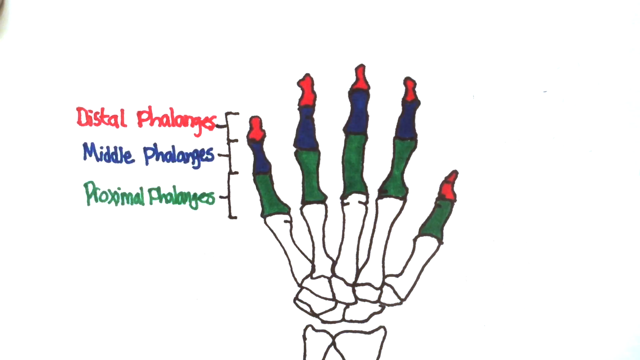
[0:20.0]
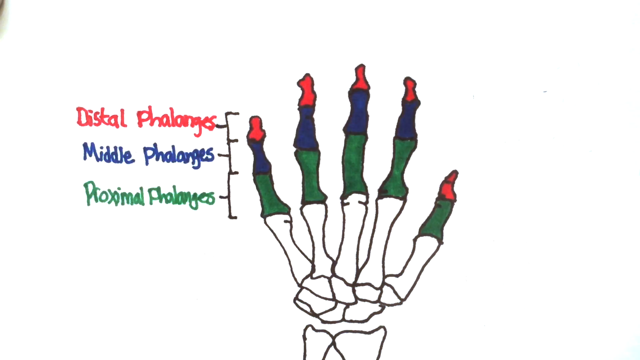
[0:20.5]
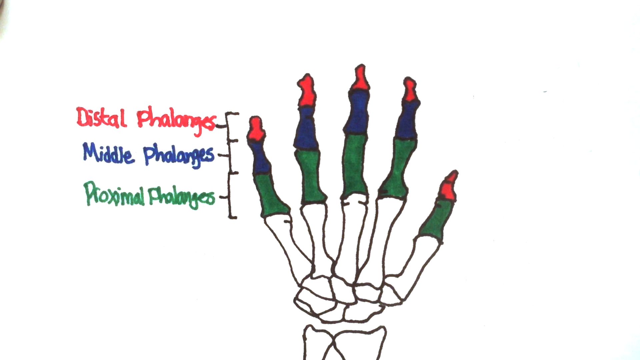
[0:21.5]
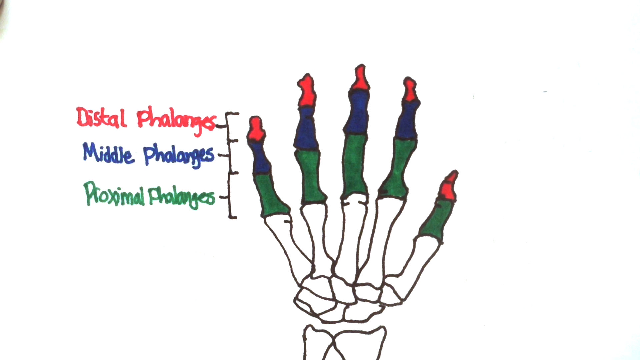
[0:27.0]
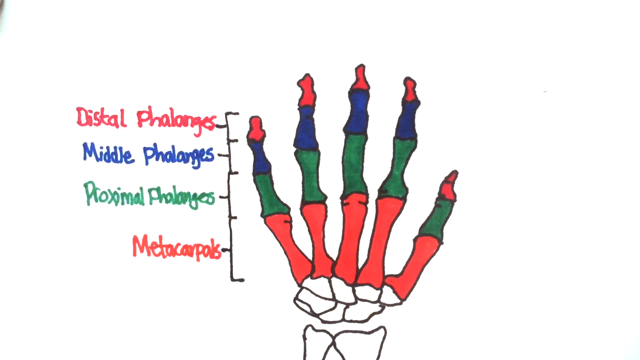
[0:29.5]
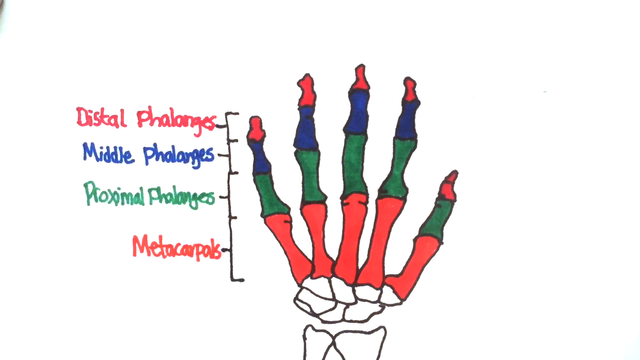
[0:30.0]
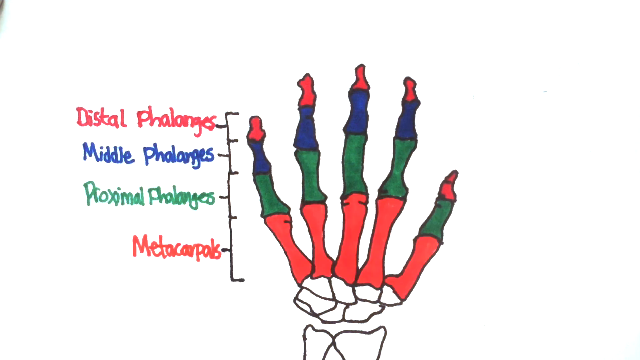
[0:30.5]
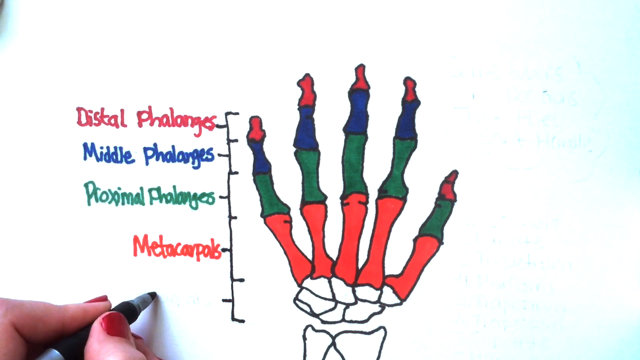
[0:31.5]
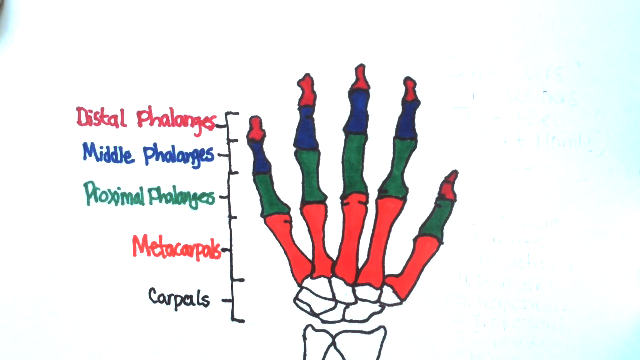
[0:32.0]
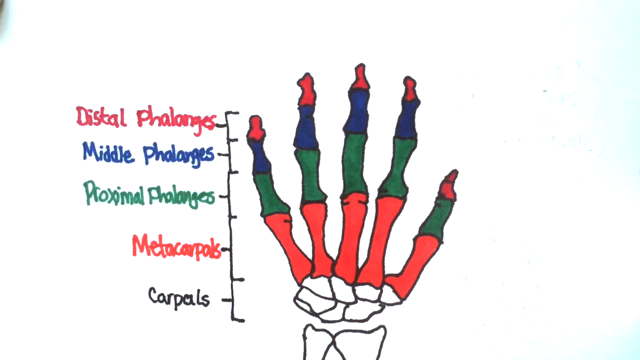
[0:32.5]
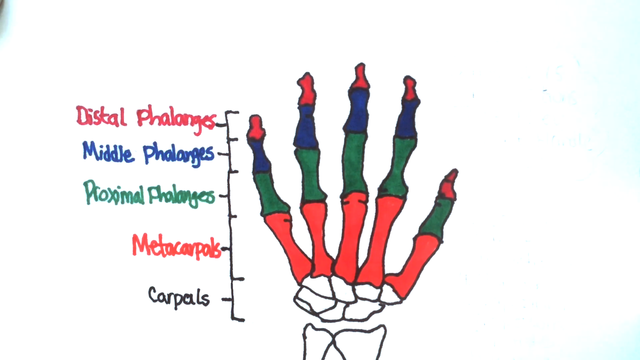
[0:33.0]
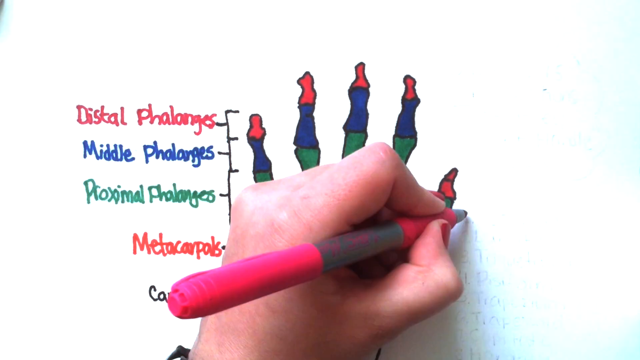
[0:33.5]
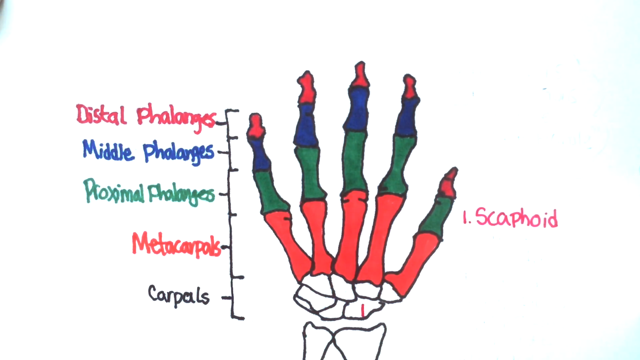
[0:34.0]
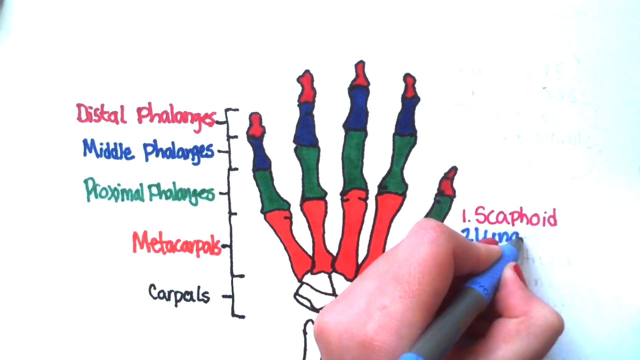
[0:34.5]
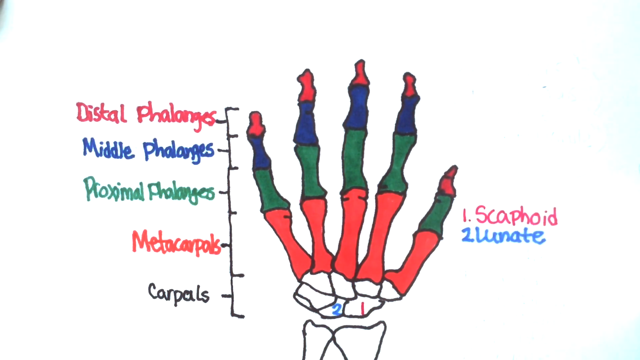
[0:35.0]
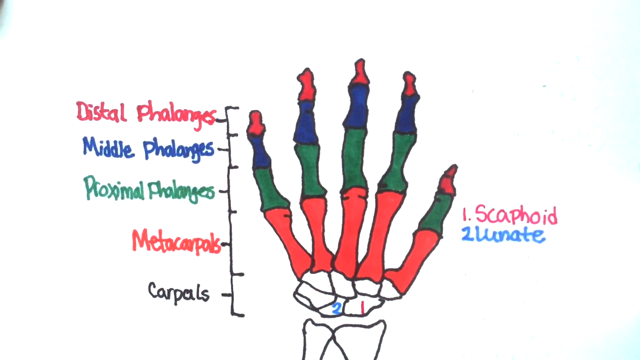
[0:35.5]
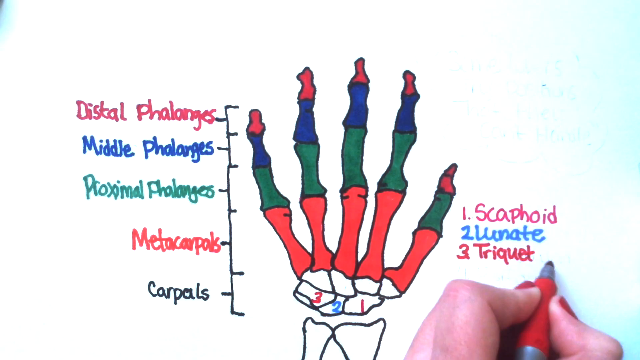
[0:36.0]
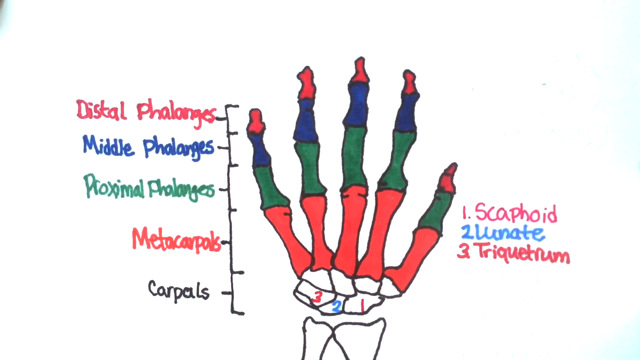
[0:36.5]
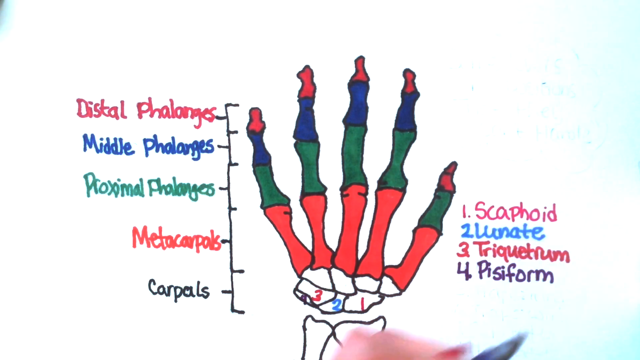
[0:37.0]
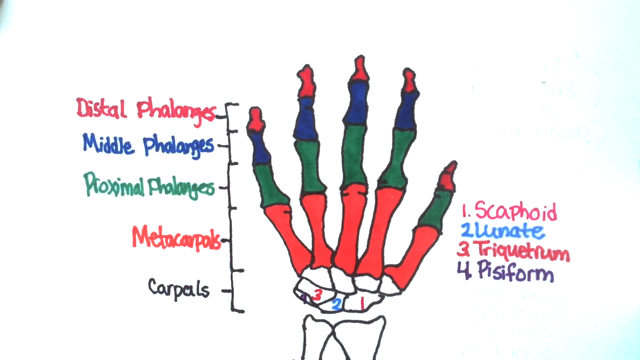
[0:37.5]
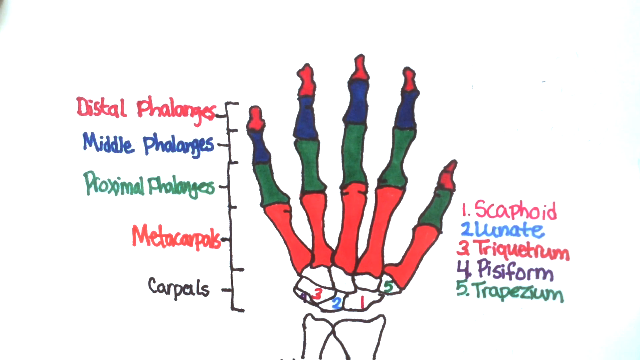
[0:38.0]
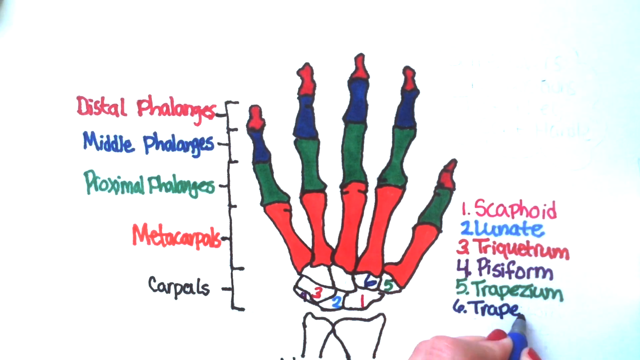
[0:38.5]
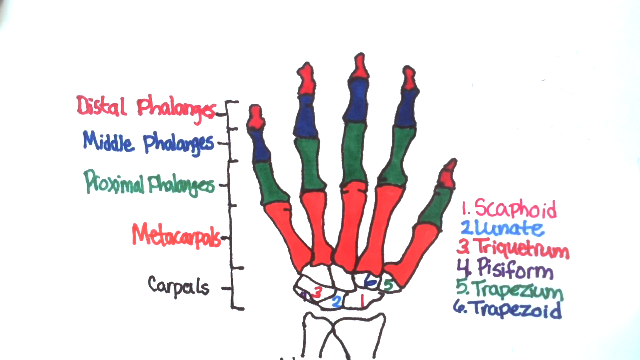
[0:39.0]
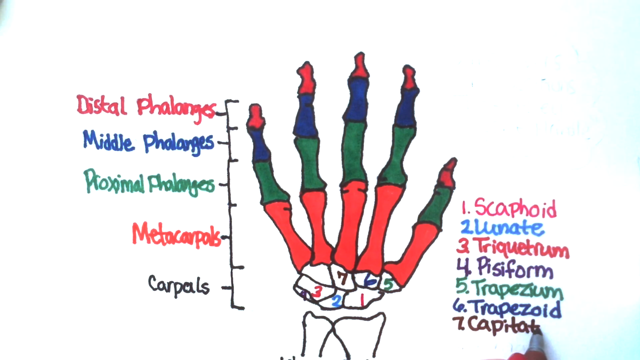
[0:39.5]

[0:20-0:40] On the left side, a line goes down with lines going over to the positions of the fingers, pointing at the pinky finger. The top one points to the red section and a label to its left says "distal phalanges." The blue is labeled "middle phalanges," the green "proximal phalanges," the main red section "metacarpals," and the hand "carpals." Words are then written off to the right side, each in a different color, matching the numbers in the base of the hand: in pink, "1 scaphoid," then "2 lunate," "3 triquetrum," "4 pisiform," "5 trapezium," "6 trapezoid" and "7 capitate." The thumb on the right goes up with a red tip, then green, then red, then the white of the hand part. The fingers are colored the same way, except the second section down is blue, then green, then red, and then down to the hand part.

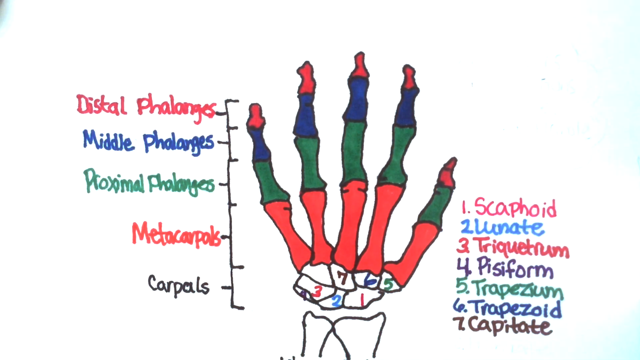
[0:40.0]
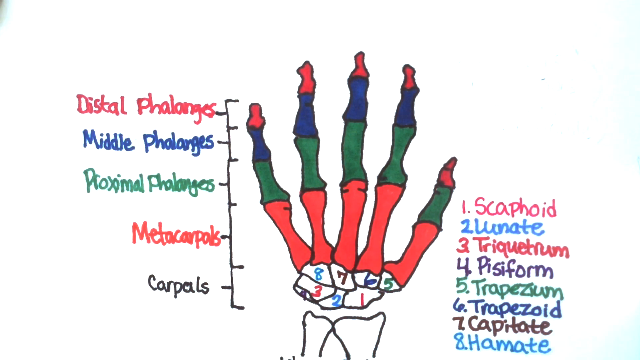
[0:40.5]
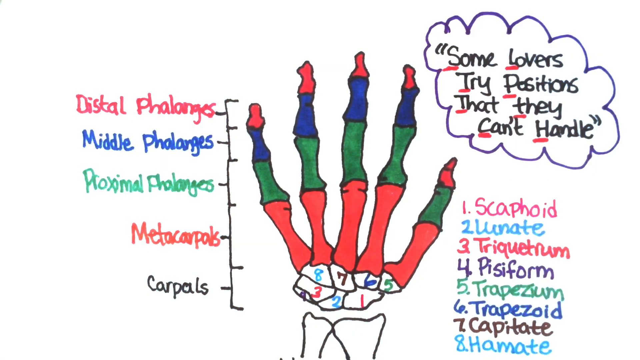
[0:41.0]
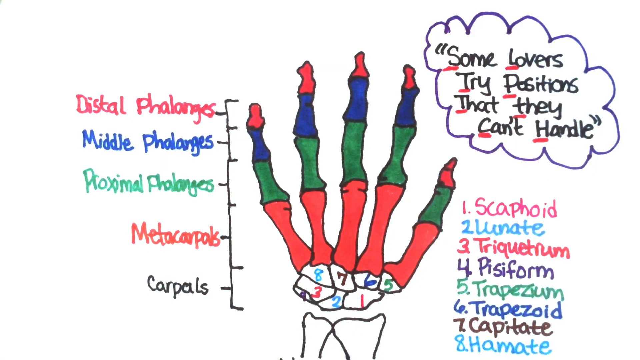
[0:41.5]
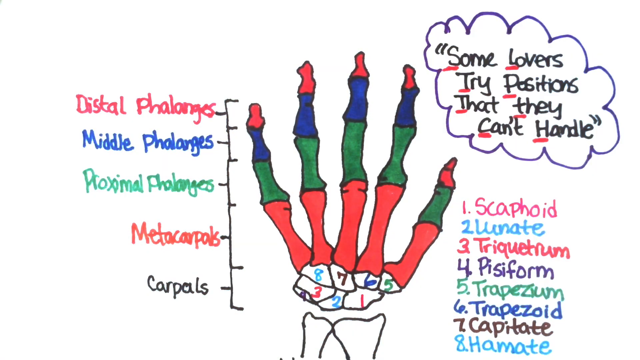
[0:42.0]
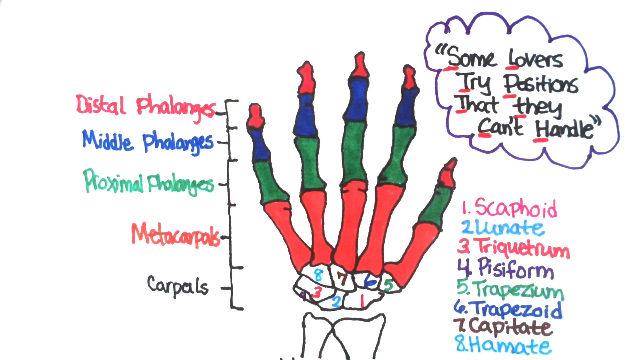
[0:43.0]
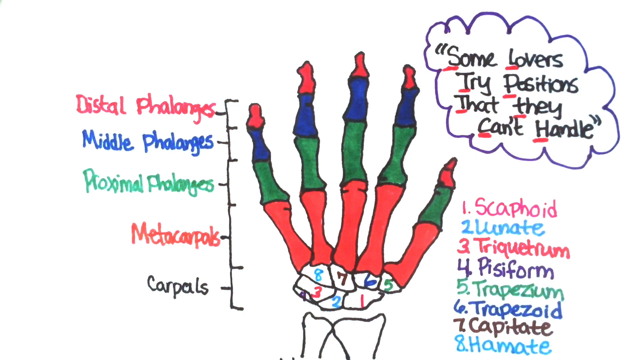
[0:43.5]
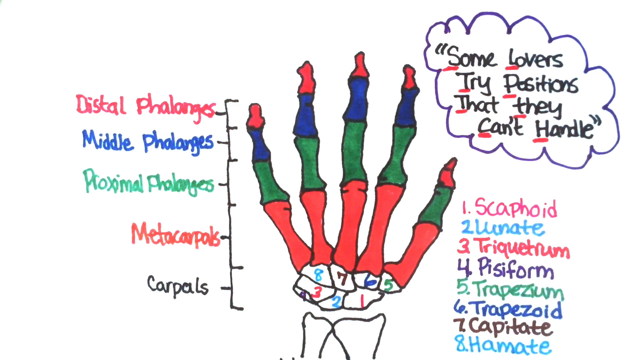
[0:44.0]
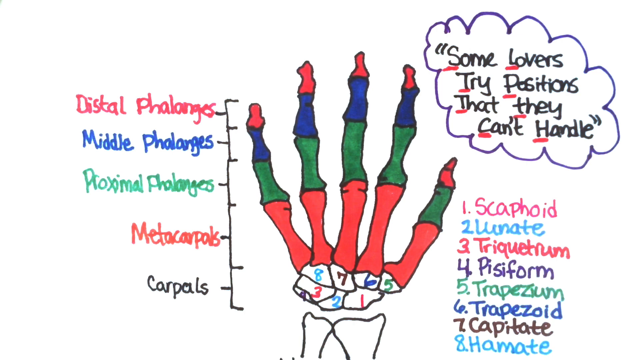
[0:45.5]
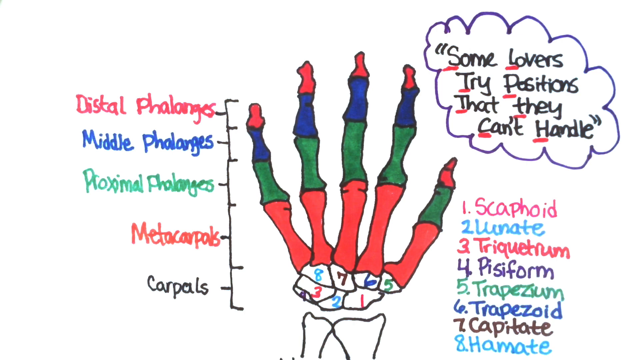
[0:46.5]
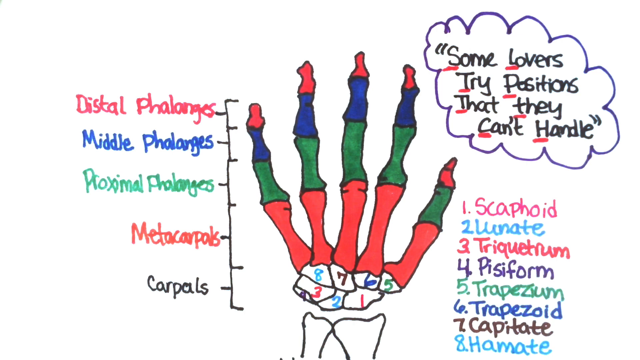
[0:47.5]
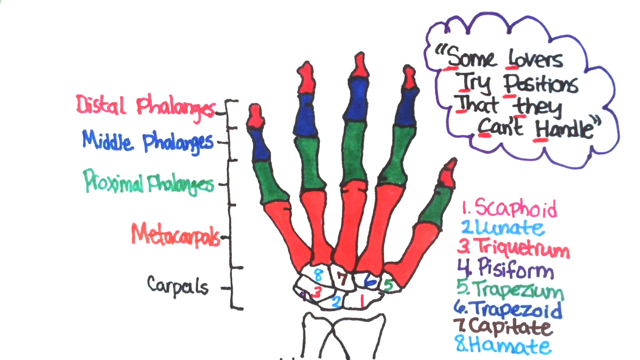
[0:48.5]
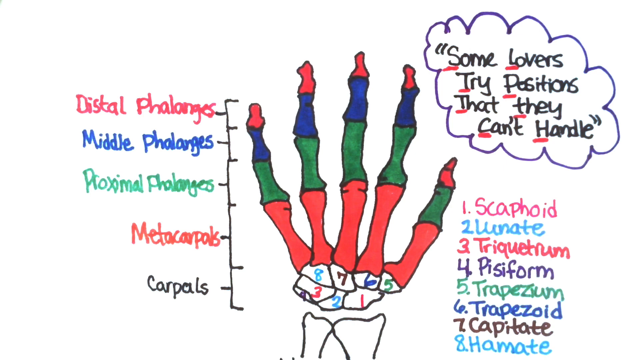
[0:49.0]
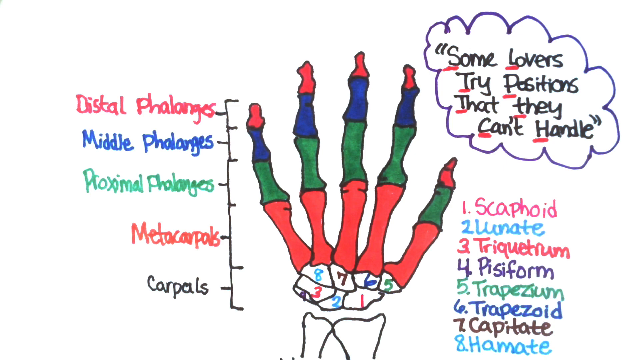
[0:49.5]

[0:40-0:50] After the information about the white portion of the hand is written in the bottom right corner, the small cloud is drawn in the top right, with black text that says "some lovers try positions that they can't handle," the first letters of the words underlined in red. Down the left side, a black line runs down with lines coming off it pointing to the different parts of the fingers and hand. The top label, in red, is "distal phalange," then blue "middle phalanges," green "proximal phalanges," red "metacarpals," and at the bottom in black "carpals." Five lines point to the left and six point to the right off the single black line running down.